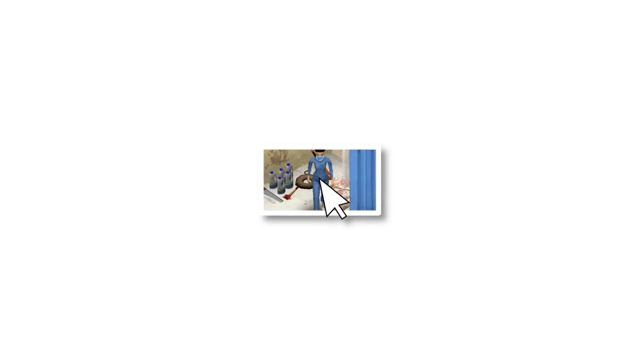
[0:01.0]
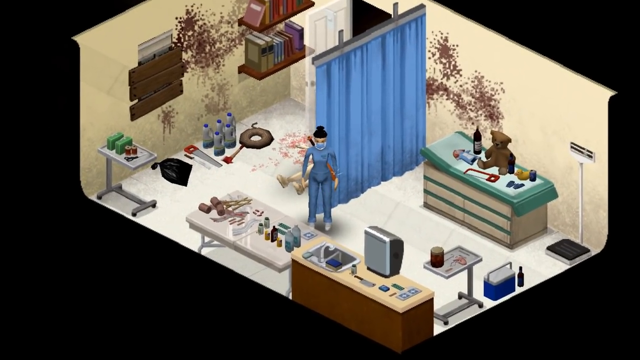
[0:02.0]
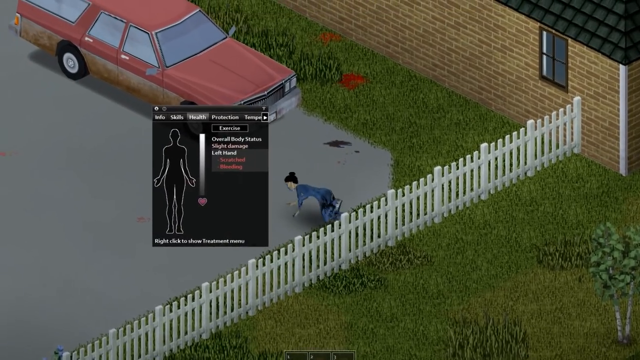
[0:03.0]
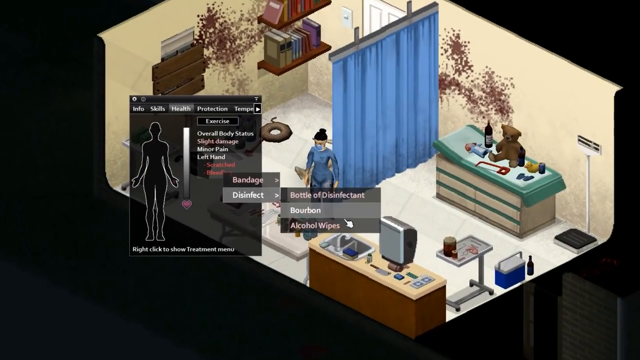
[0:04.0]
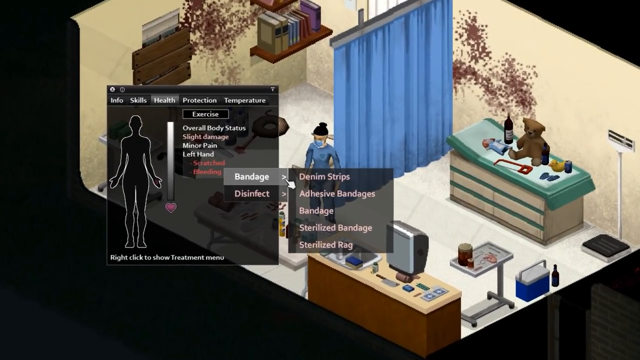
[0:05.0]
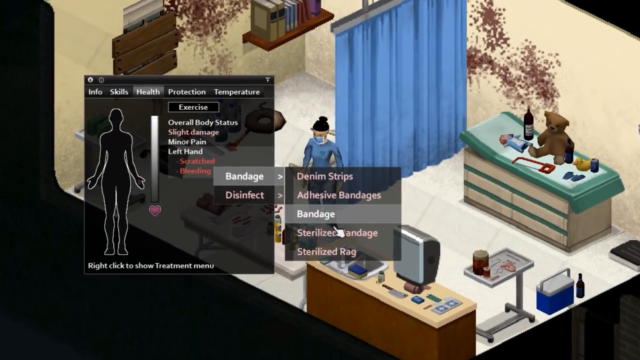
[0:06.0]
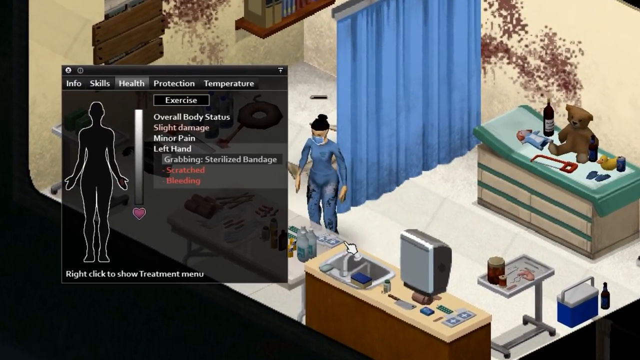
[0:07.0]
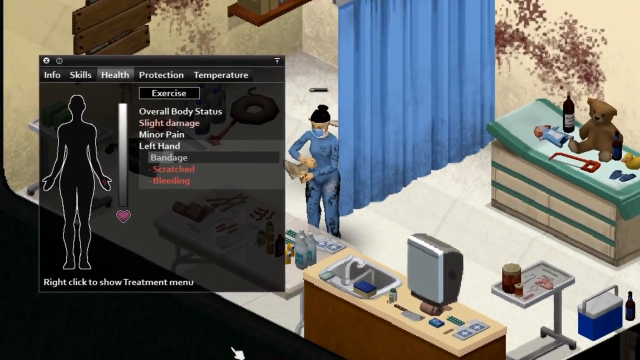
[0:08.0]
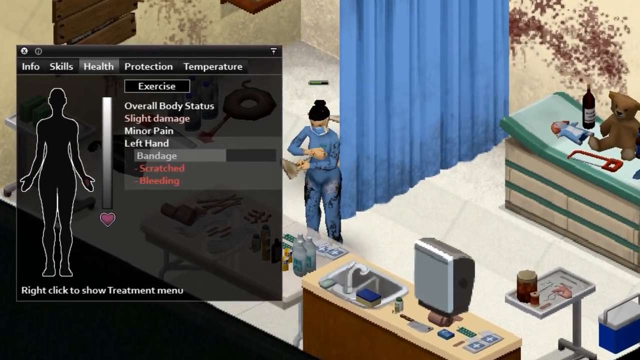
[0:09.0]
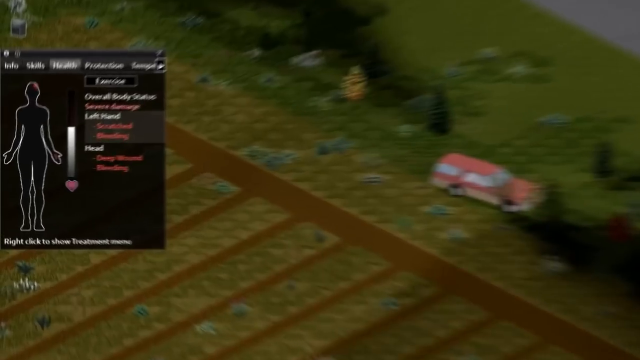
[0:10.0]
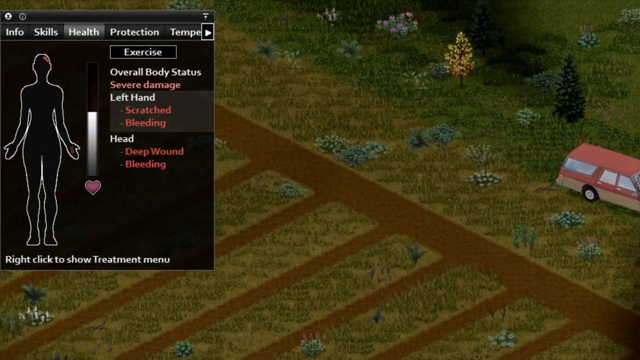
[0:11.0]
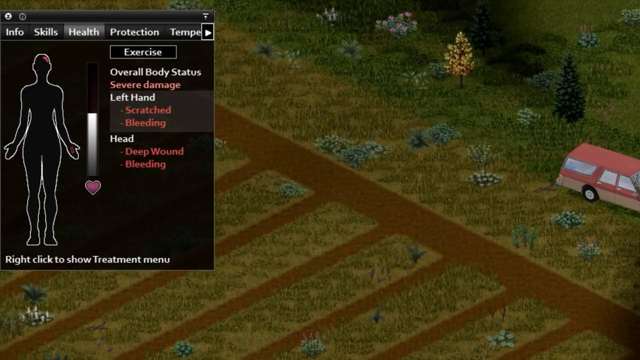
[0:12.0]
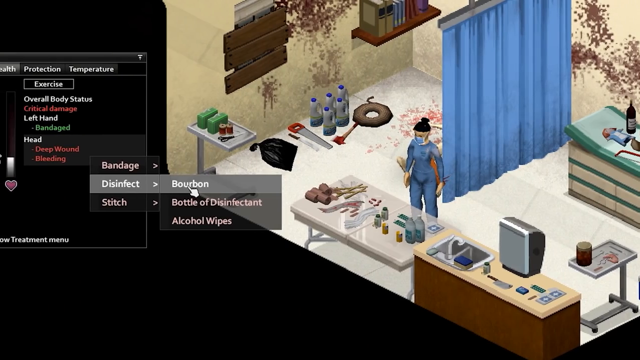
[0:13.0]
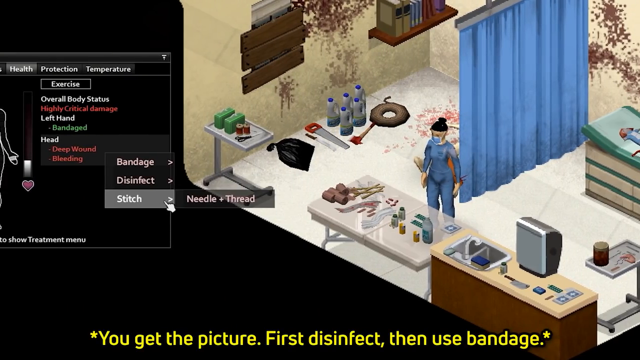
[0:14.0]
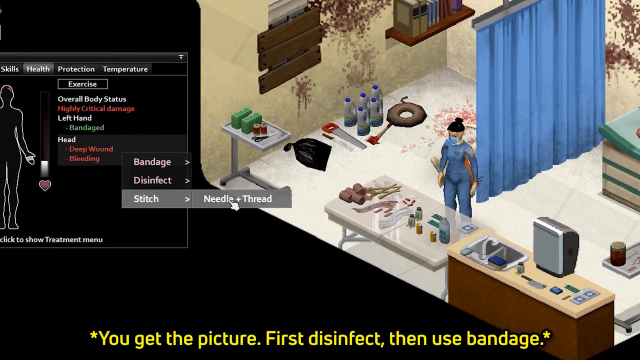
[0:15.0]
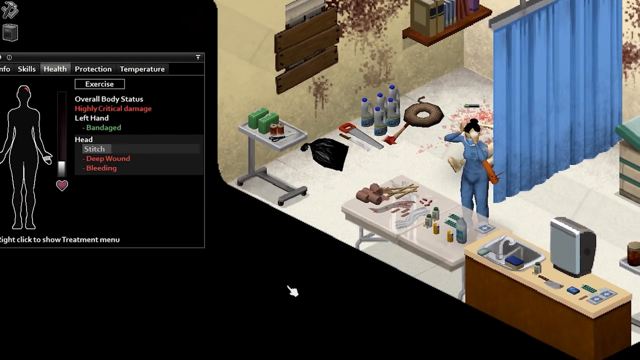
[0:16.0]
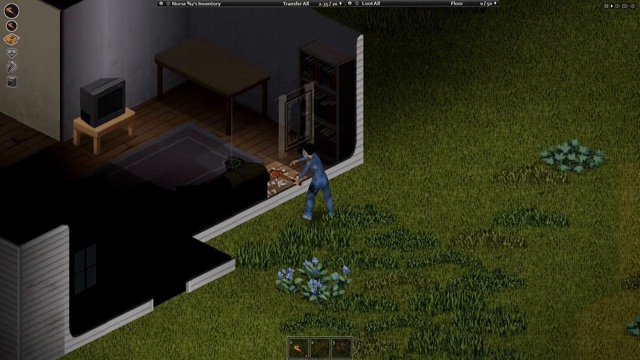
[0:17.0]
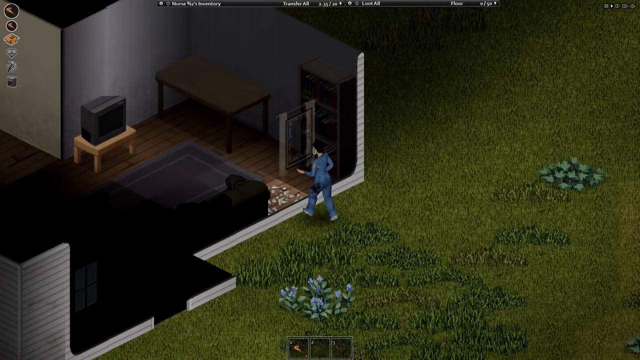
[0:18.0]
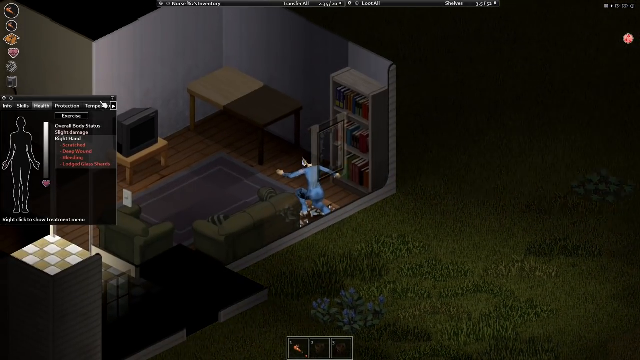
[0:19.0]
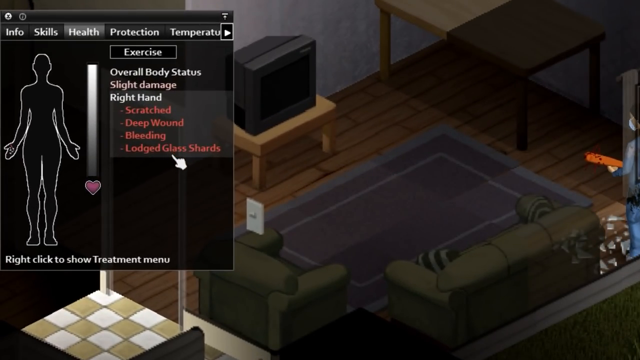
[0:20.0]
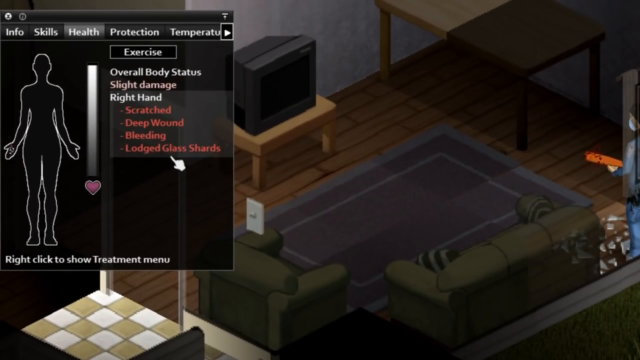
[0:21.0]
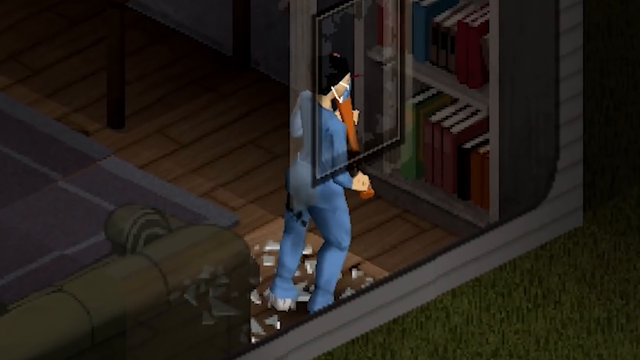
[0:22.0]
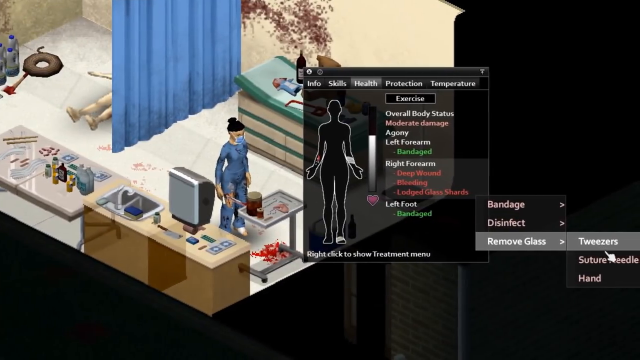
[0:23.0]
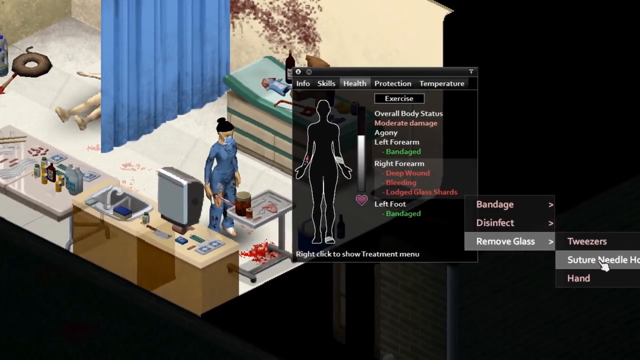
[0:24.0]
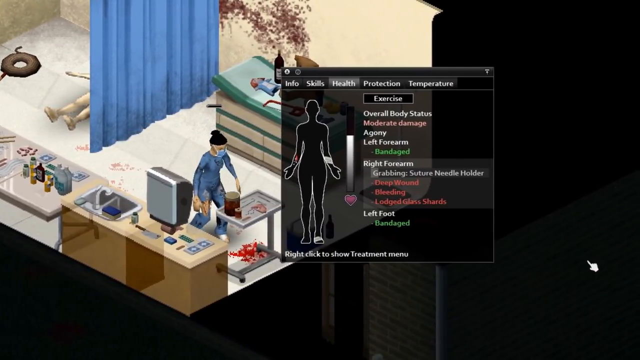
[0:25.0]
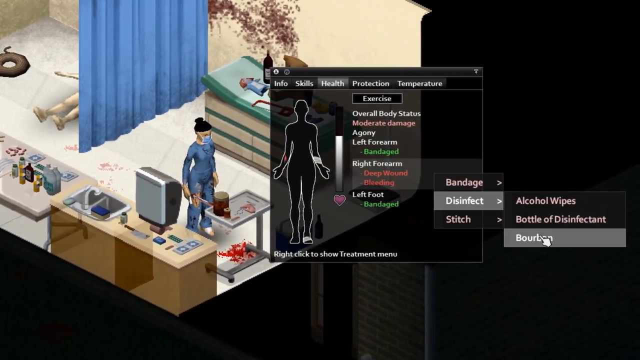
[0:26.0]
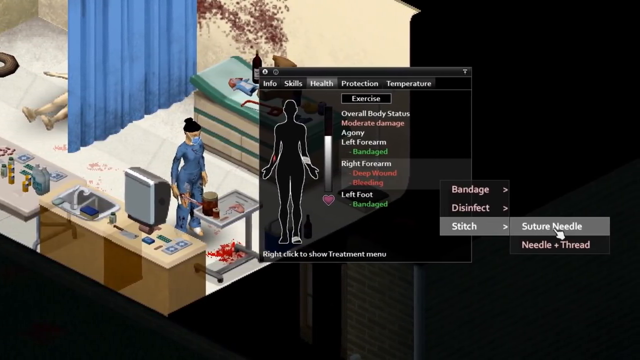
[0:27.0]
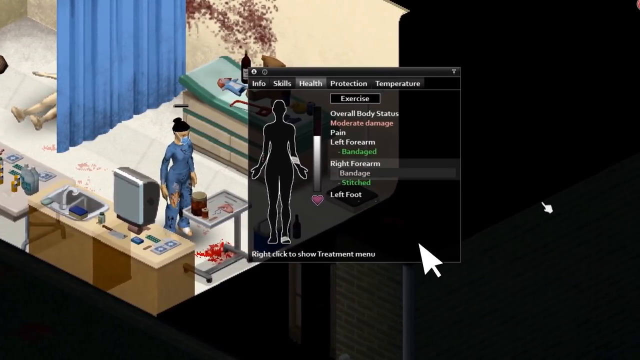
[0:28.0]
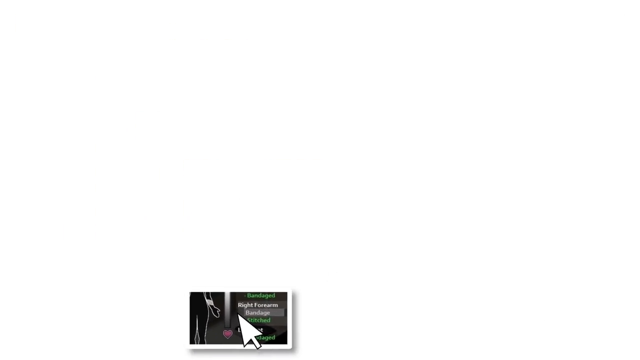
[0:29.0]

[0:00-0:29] A video game shows a woman dressed in a blue outfit. She is standing in a room surrounded by a saw, some bottles of what looks like a chemical or bleach, a black trash bag and a table. In front of her is a larger white table with all sorts of items on it. Beside the table are a kitchen, a sink, and cabinets topped with a wash hand basin. Across the wall behind her and to her side are what look like blood splatters, on the wall as well as on the floor, and the room appears to be a crime scene. Next, she is holding a baseball bat in her hand. She seems to be looking for somebody as she breaks through the glass and wields the baseball bat.